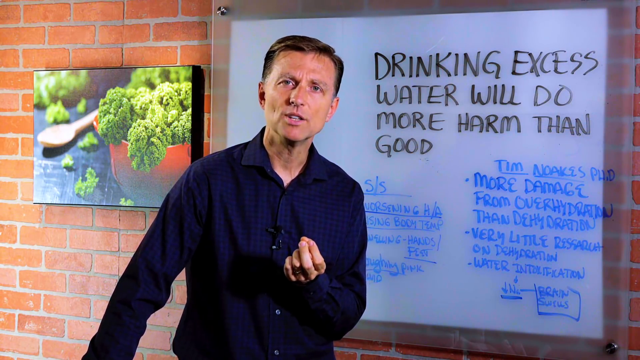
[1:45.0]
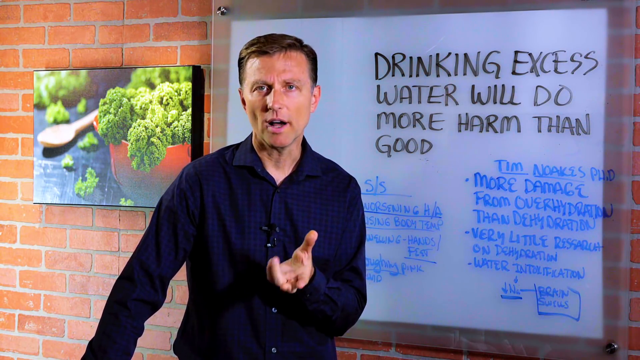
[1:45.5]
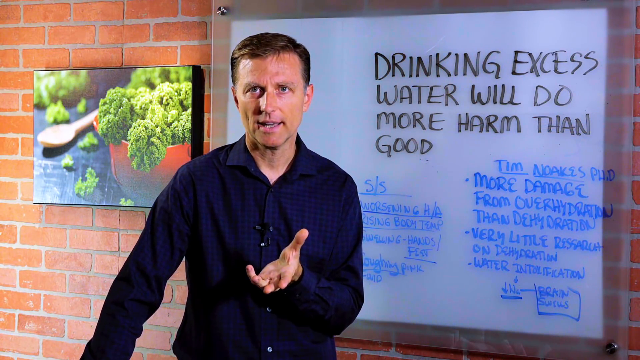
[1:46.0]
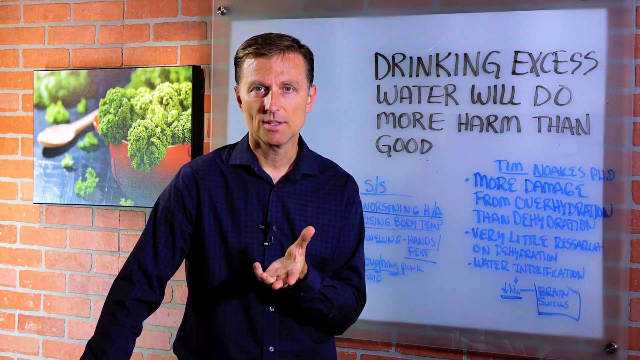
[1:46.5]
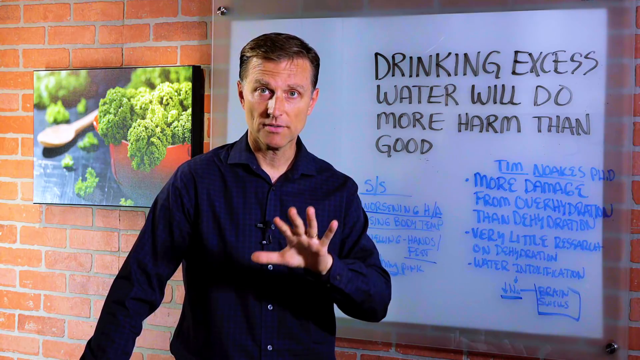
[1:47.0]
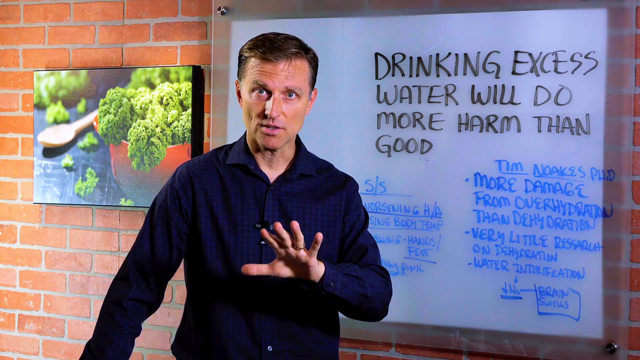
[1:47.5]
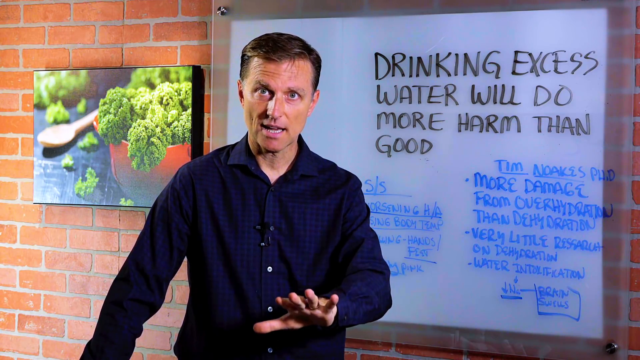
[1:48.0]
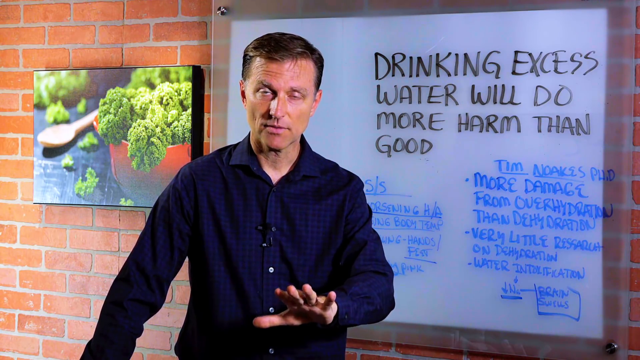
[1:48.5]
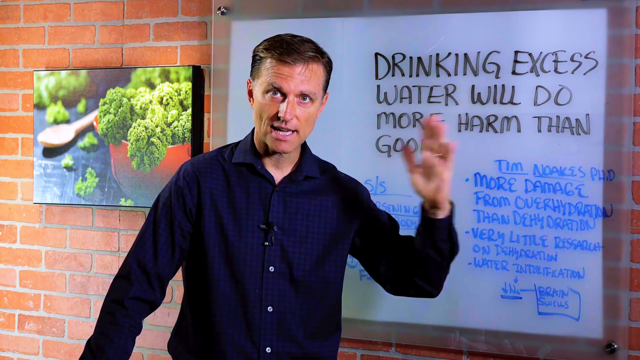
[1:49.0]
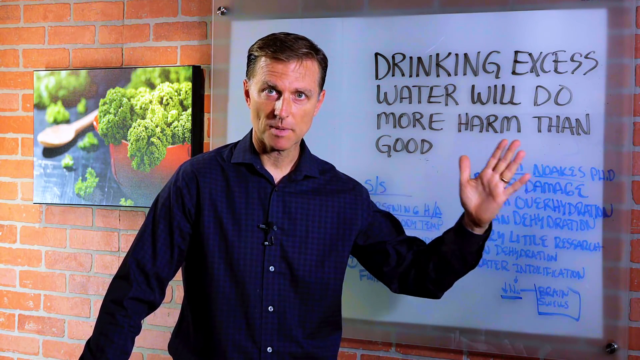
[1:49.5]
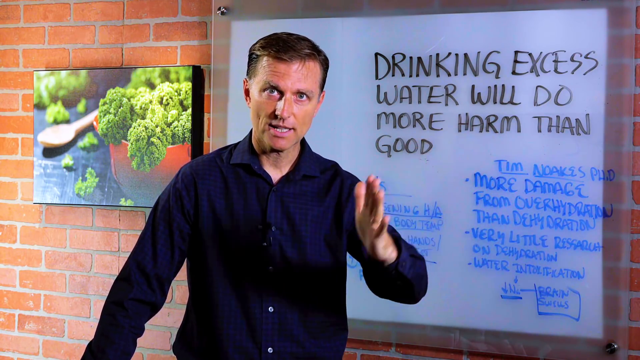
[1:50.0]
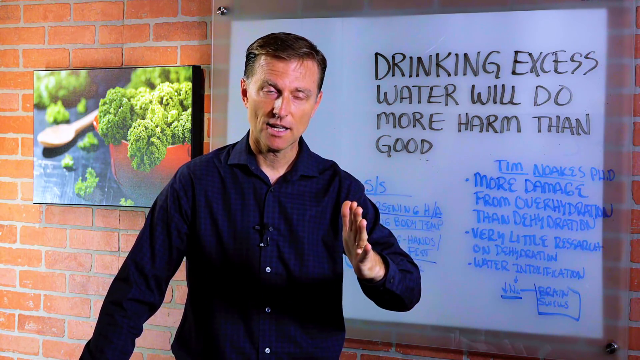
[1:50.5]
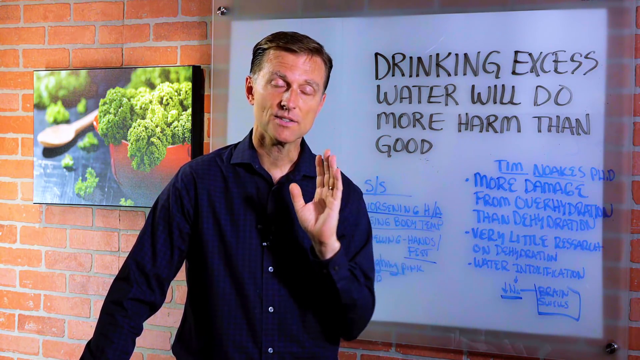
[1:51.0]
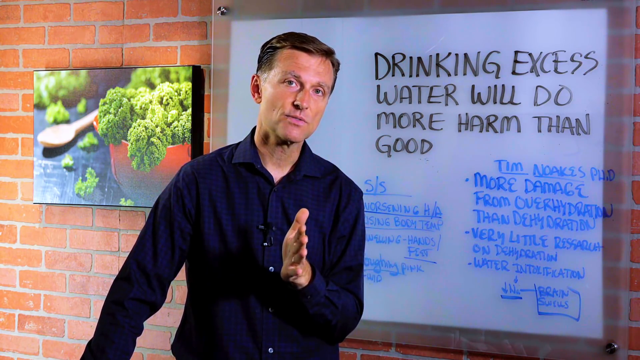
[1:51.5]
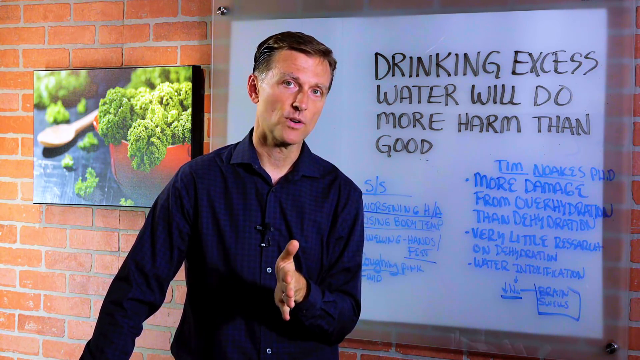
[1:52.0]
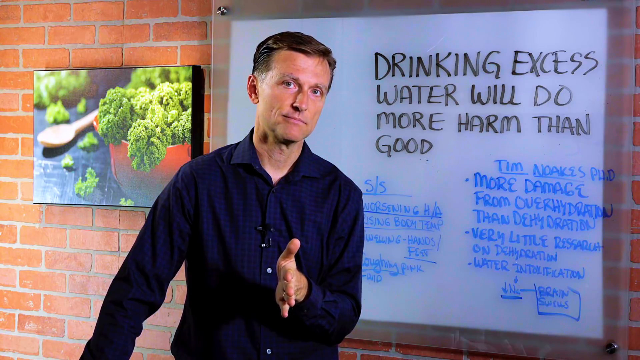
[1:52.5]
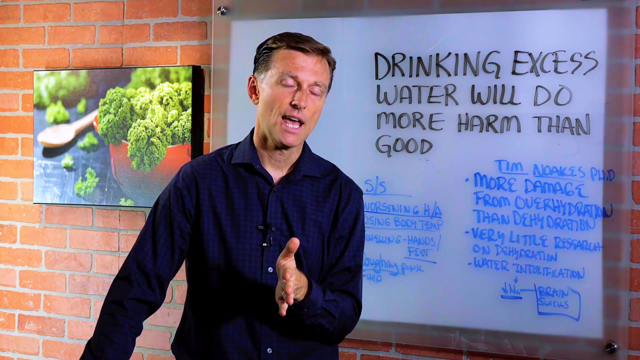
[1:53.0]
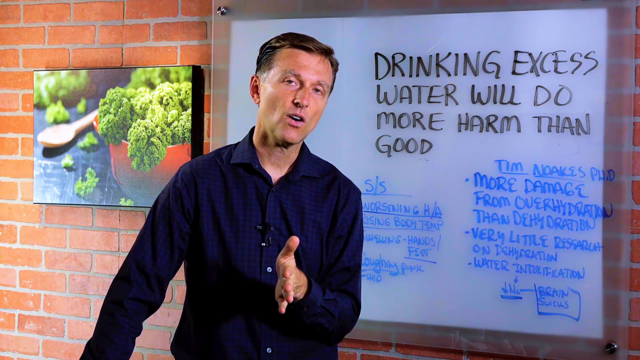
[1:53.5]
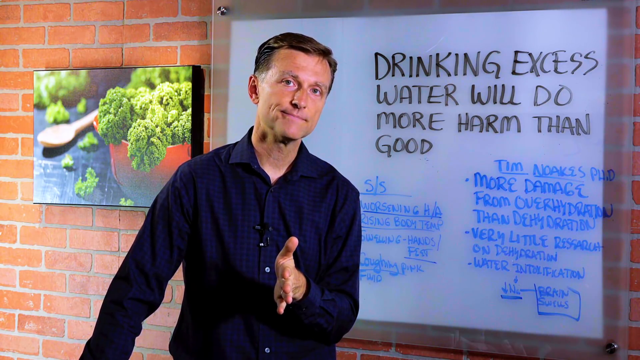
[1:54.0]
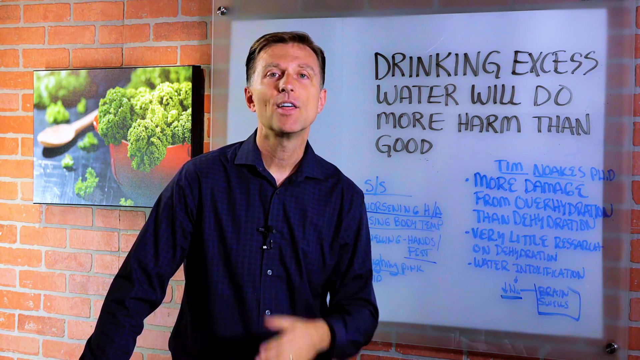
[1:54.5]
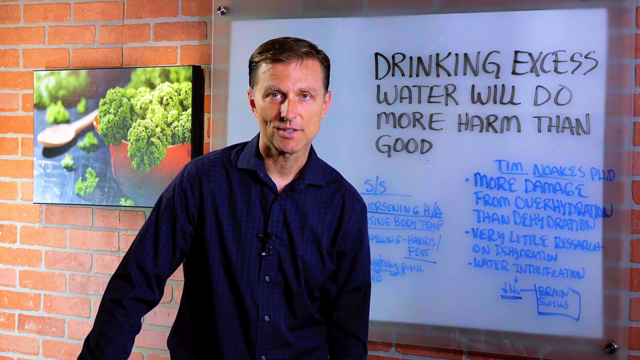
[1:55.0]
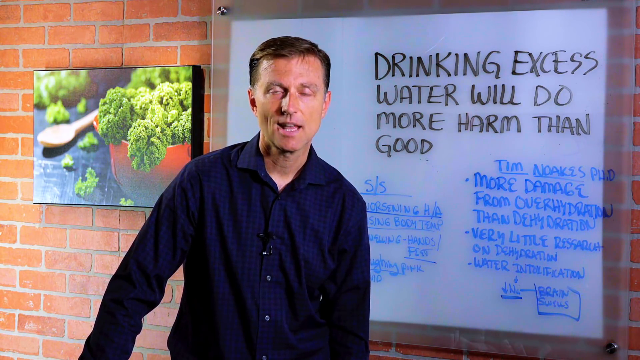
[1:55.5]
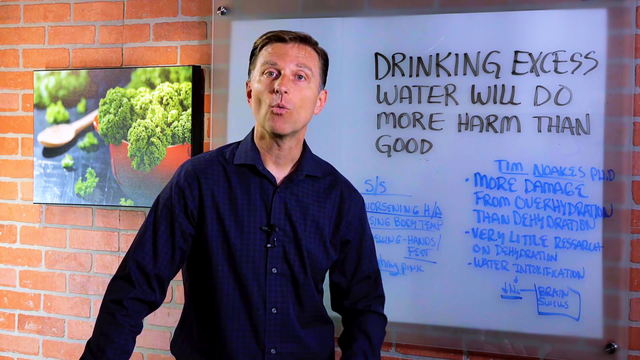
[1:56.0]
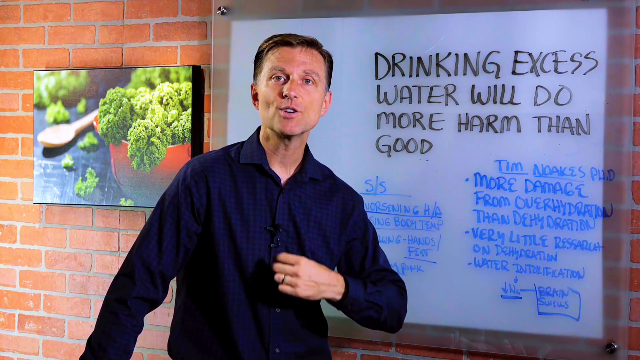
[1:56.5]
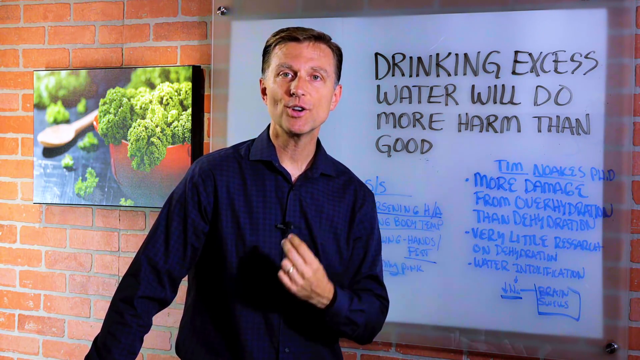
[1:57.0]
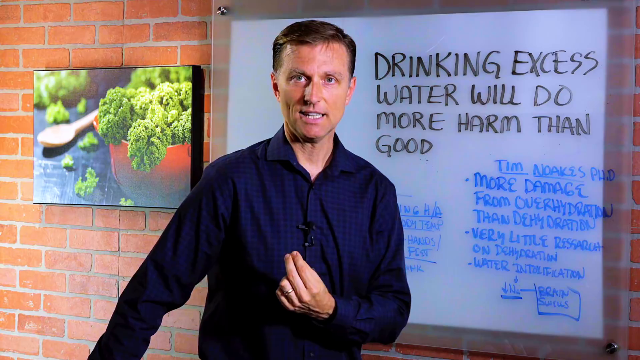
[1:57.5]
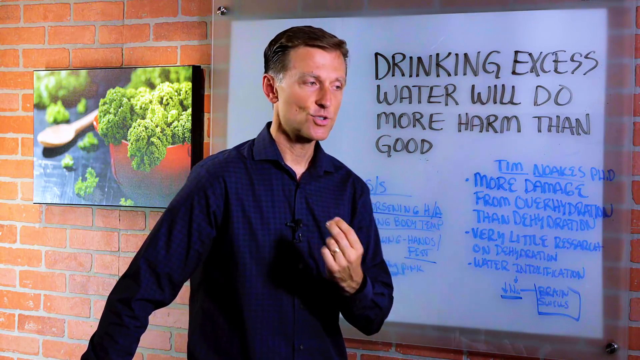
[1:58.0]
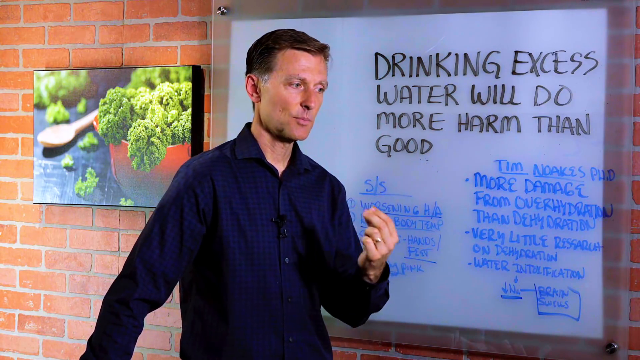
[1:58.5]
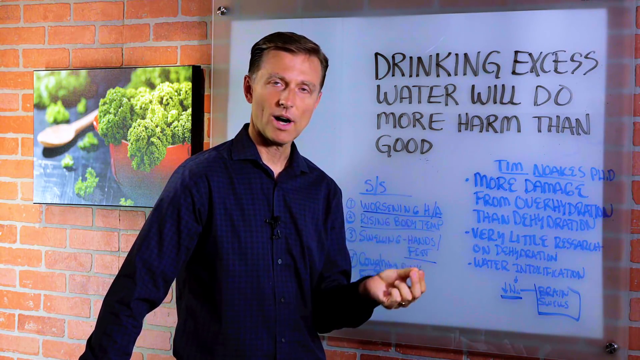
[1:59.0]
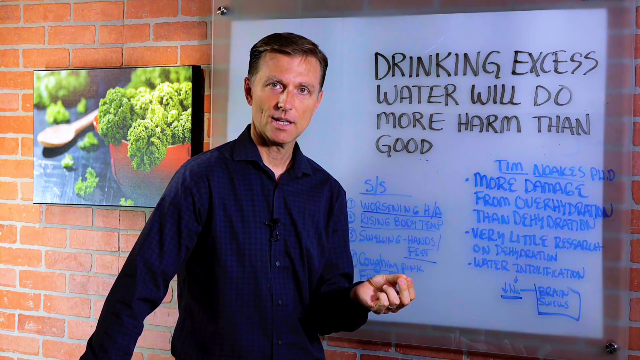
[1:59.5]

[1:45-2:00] The instructor continues going over his points on how drinking excess water will do more harm than good. Standing and addressing the camera directly, he holds his right arm kind of down but extended outward a little, while his left arm is in front of him, helping him express what he is saying. With all five fingers extended in front of him, he pushes downward, brings his hand back, and then puts it in front of him again to emphasize the point. His expression is almost a little sarcastic, with a half smile, and he seems very engaged. He then brings his hands together in kind of a fist motion, with his index finger, middle finger and thumb touching, as he emphasizes his final points.